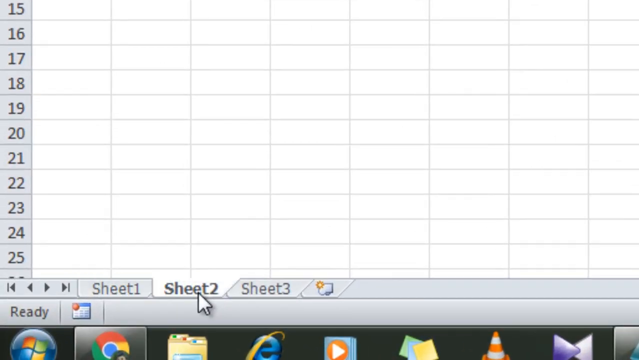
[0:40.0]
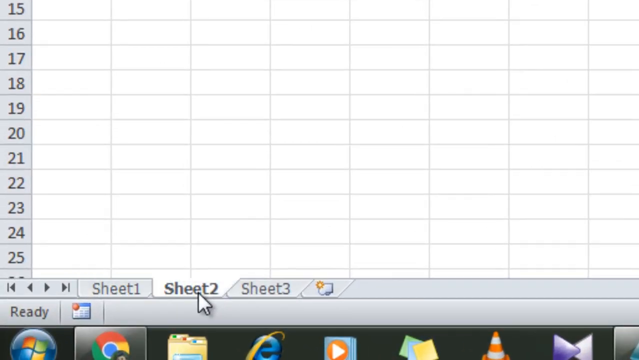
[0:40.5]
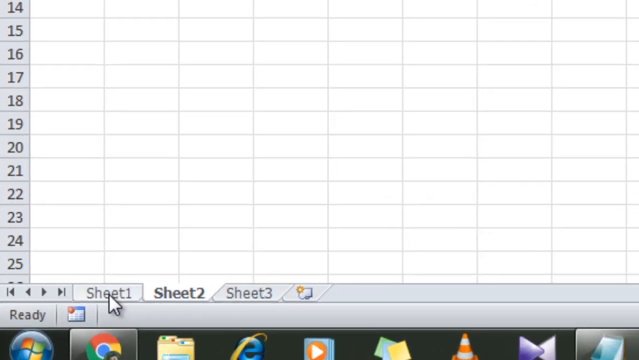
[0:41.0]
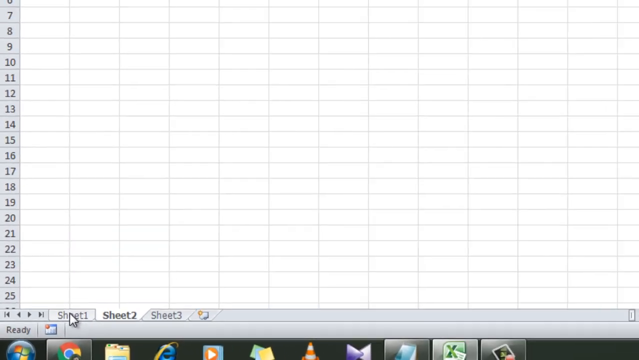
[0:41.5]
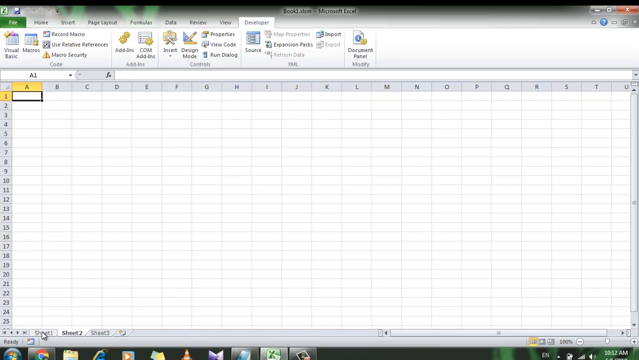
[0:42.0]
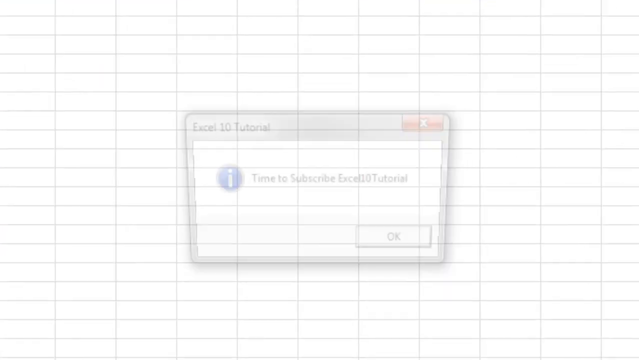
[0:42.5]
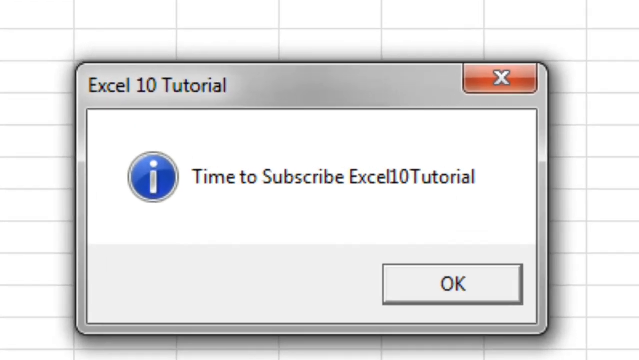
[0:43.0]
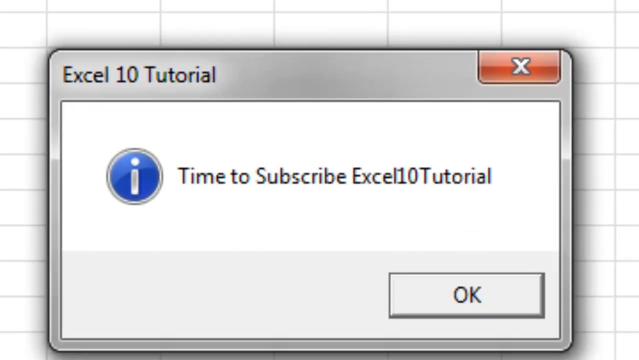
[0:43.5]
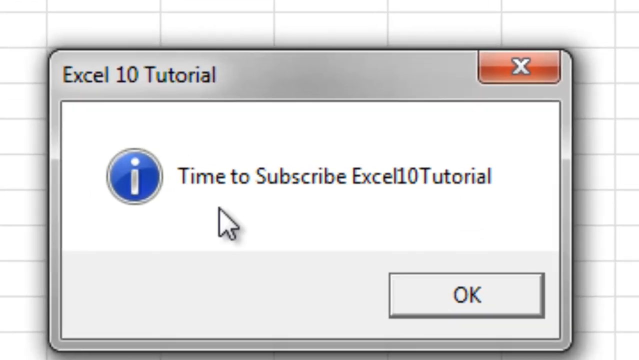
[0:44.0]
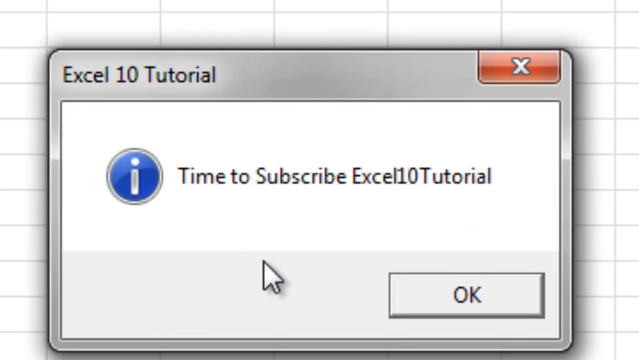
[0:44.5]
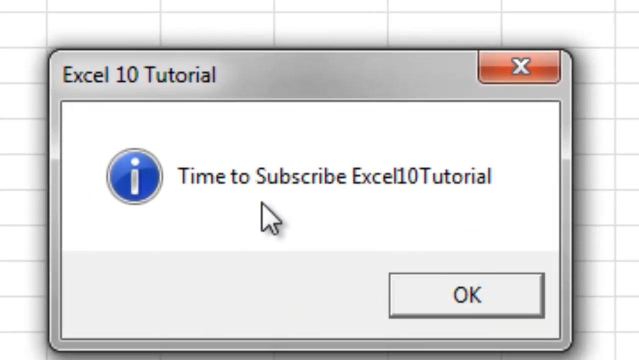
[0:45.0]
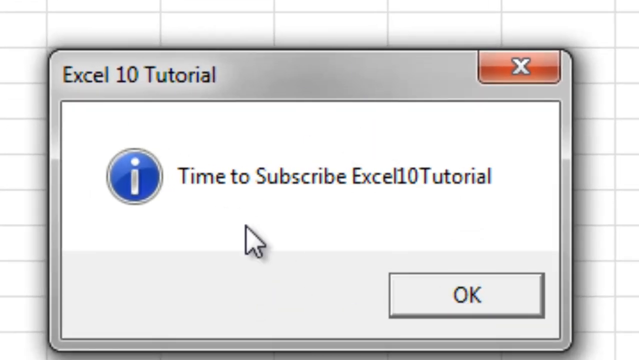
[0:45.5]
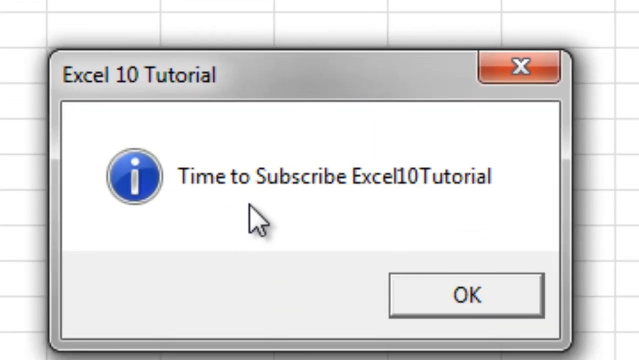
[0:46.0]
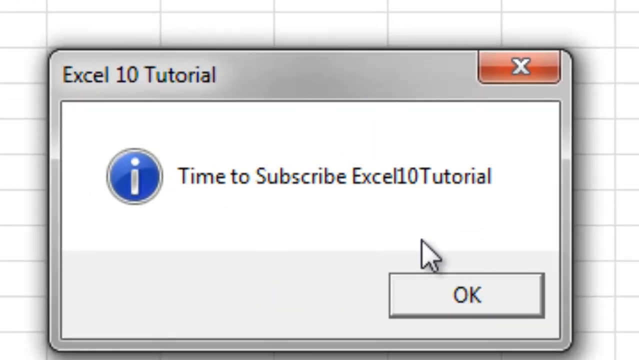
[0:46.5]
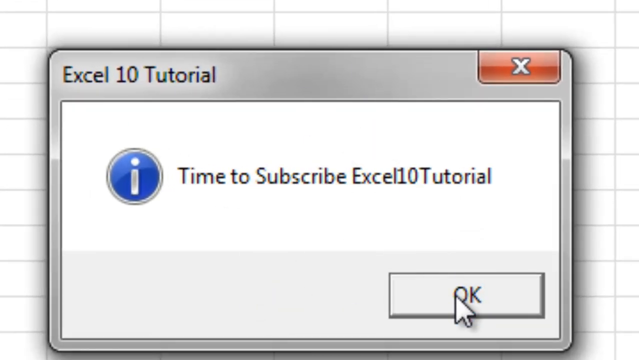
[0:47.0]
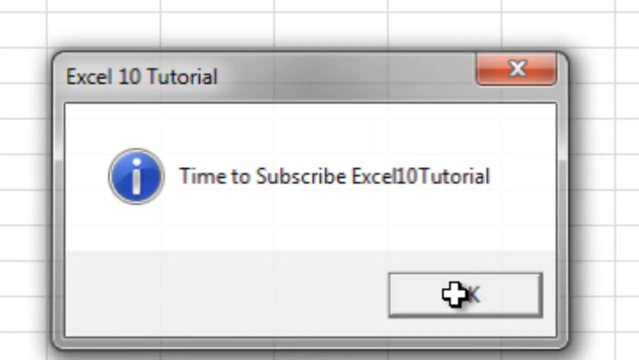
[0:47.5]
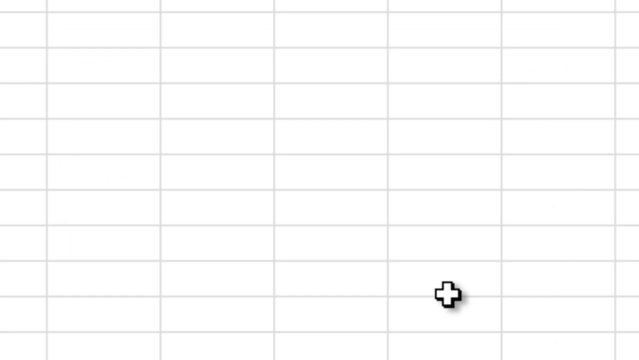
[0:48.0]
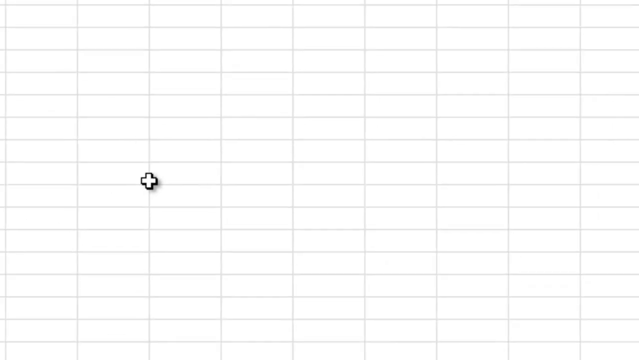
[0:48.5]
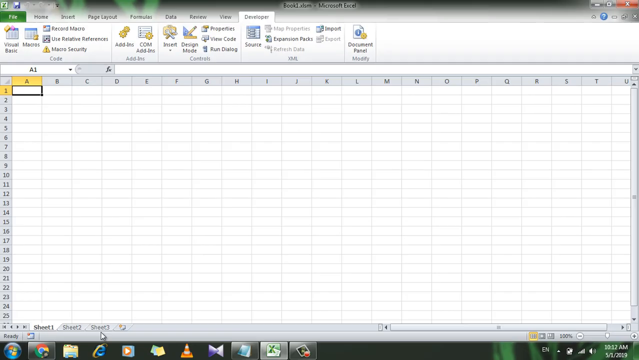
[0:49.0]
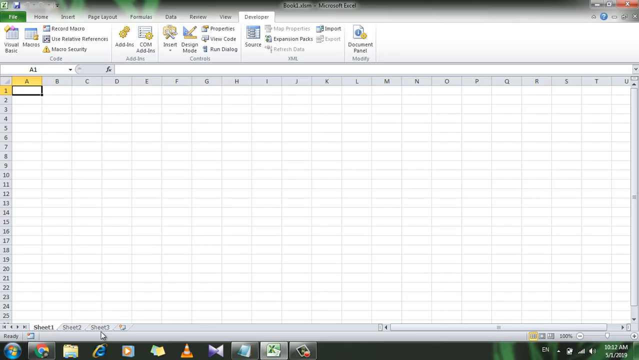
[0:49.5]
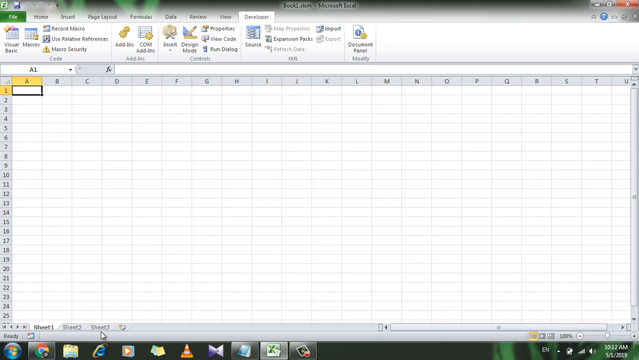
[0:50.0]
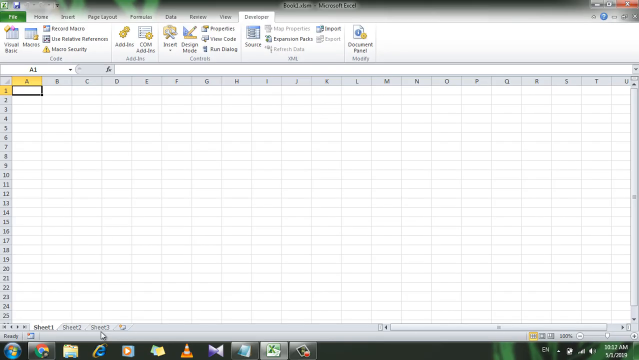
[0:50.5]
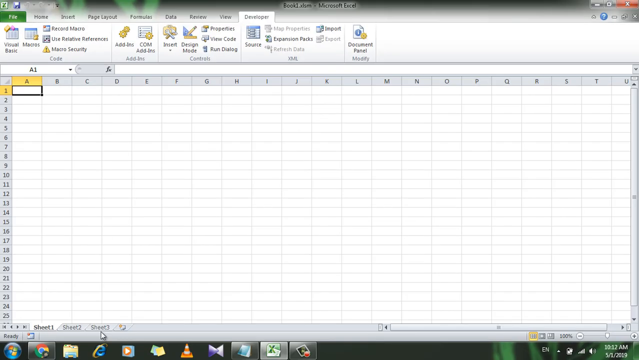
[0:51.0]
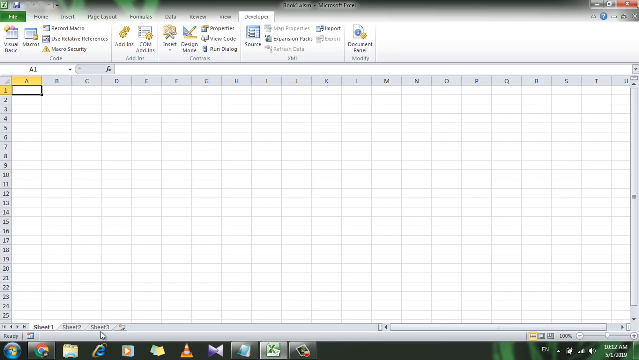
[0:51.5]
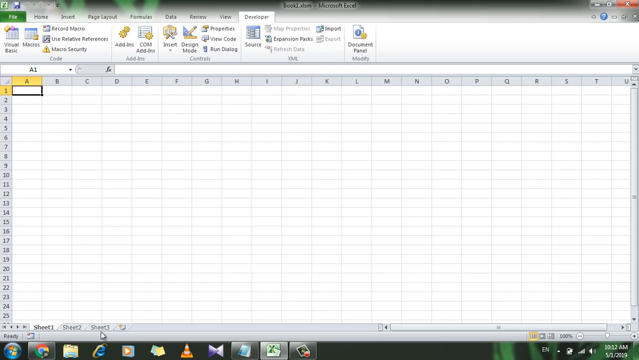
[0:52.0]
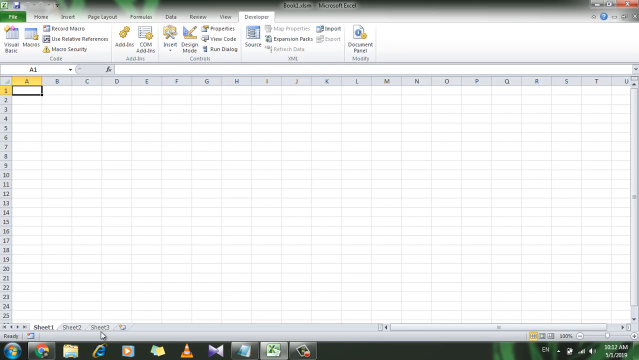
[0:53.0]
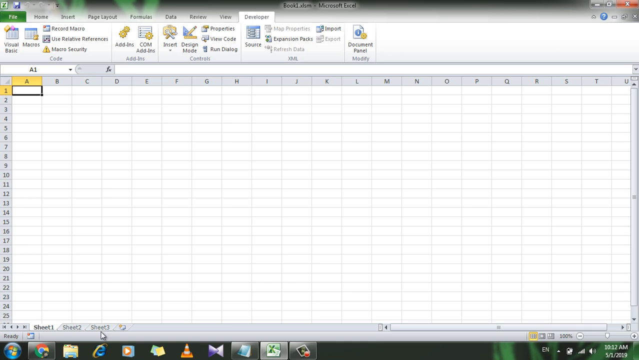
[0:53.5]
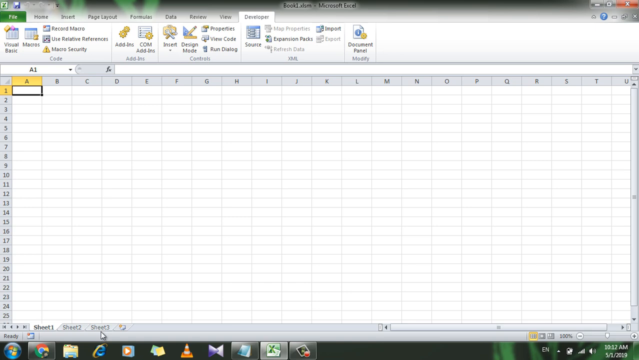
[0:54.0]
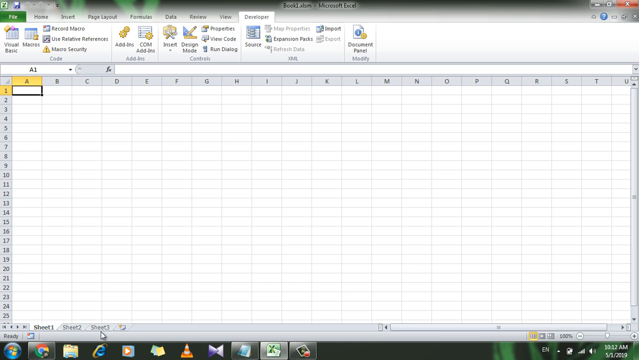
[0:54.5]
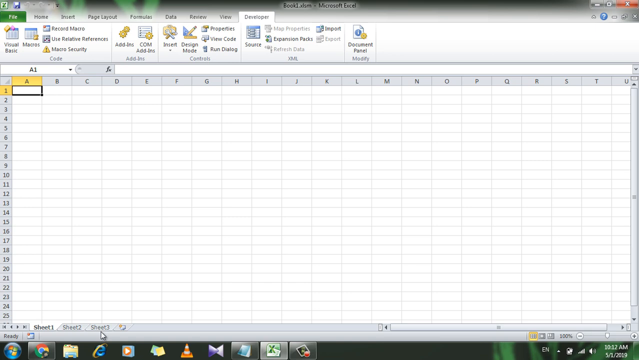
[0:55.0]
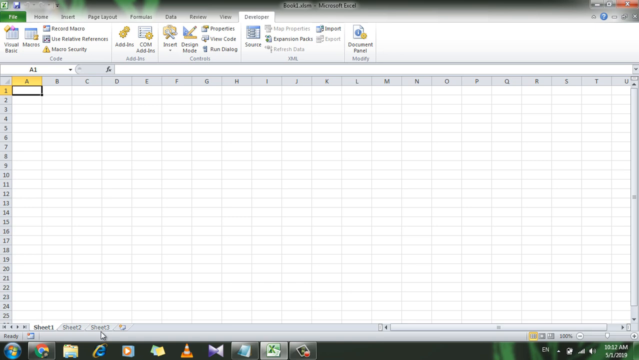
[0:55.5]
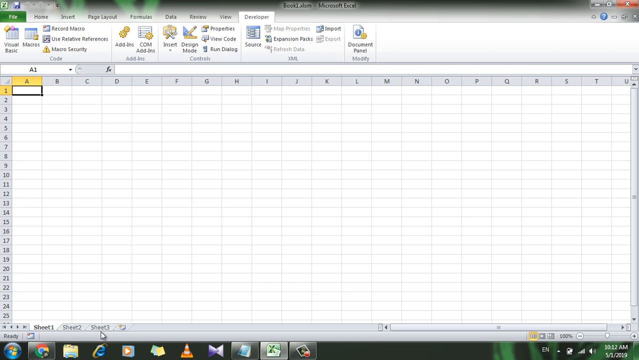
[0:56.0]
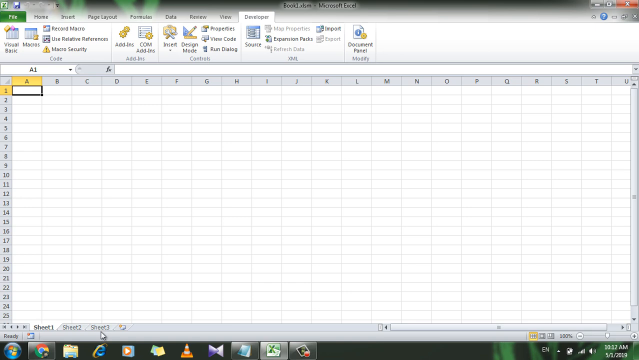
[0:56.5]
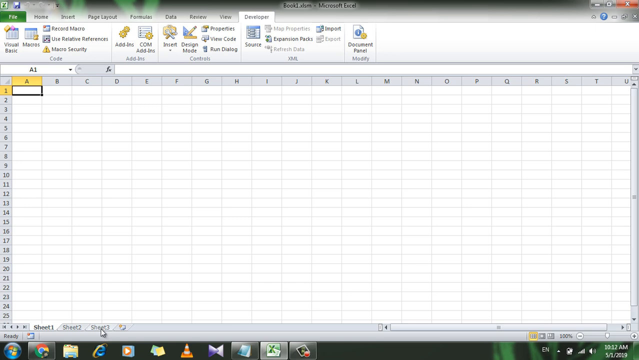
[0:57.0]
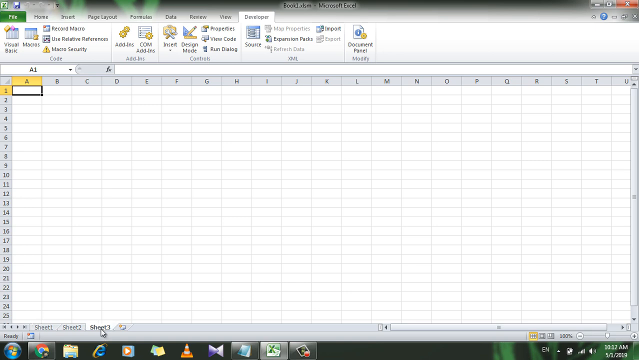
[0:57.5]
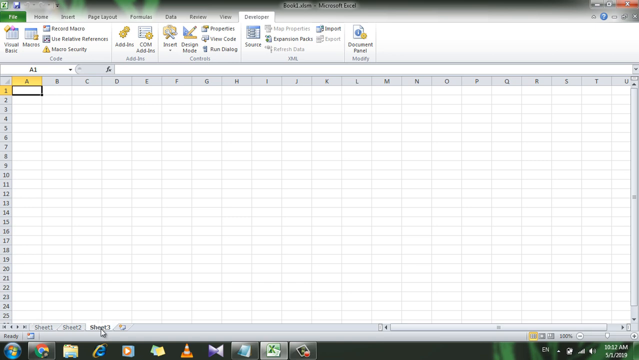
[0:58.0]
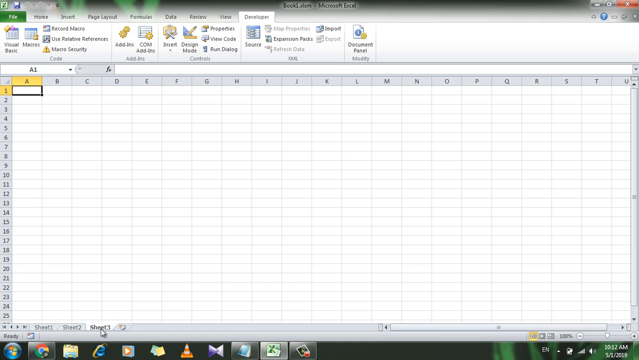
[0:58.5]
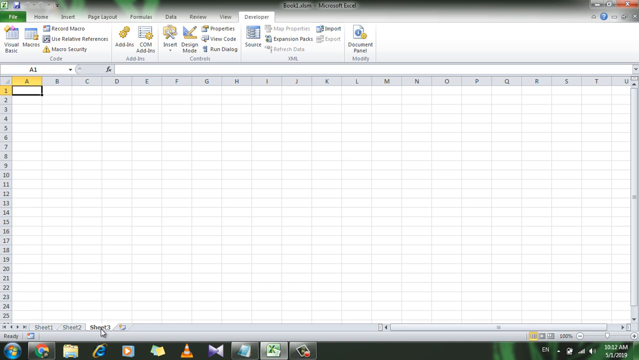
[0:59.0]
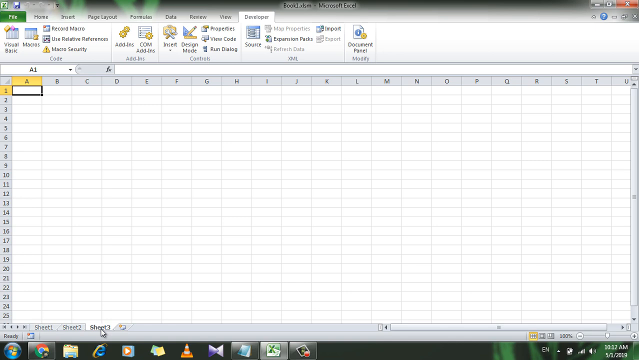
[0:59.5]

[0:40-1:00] The user goes down to the bottom left of the screen and clicks on Sheet 2, between Sheet 1 and Sheet 3. The screen zooms out very quickly and then zooms back in very quickly as a small window appears to open, showing "Excel 10 Tutorial" and the text "Time to subscribe Excel 10 Tutorial". The user moves the mouse around in a circle, then clicks the OK button at the bottom right of the small window. The window closes, and the view zooms out to show the entire Excel screen, with no additional windows open. The image then stays still, and nothing else seems to happen.